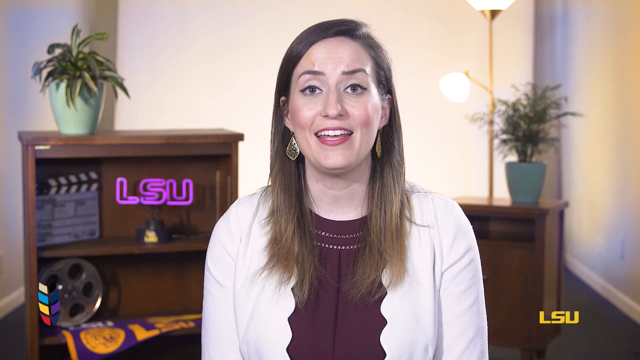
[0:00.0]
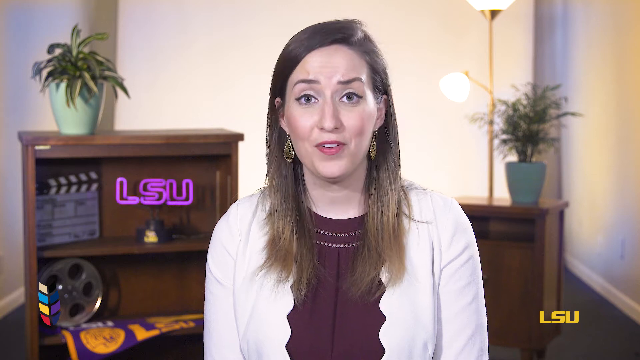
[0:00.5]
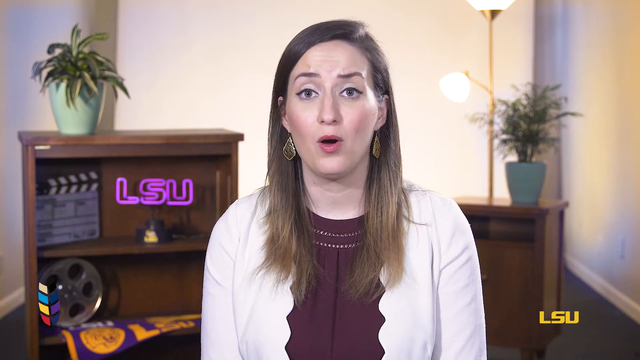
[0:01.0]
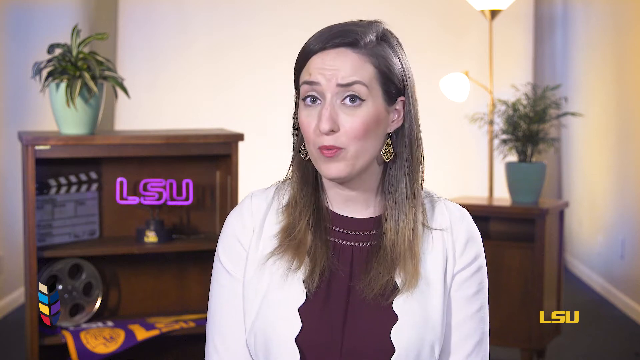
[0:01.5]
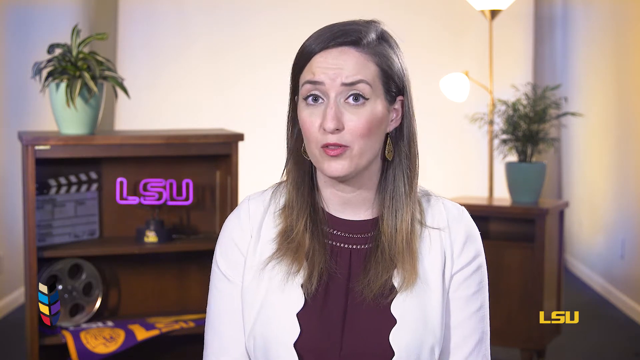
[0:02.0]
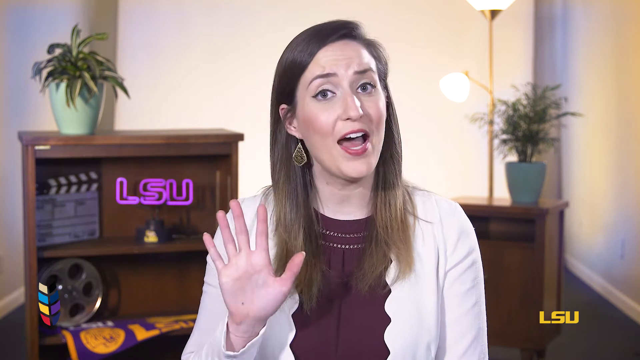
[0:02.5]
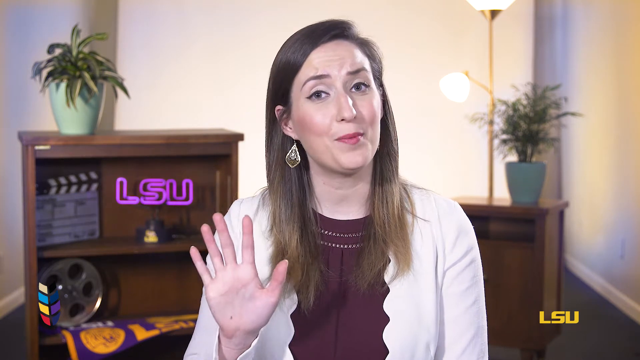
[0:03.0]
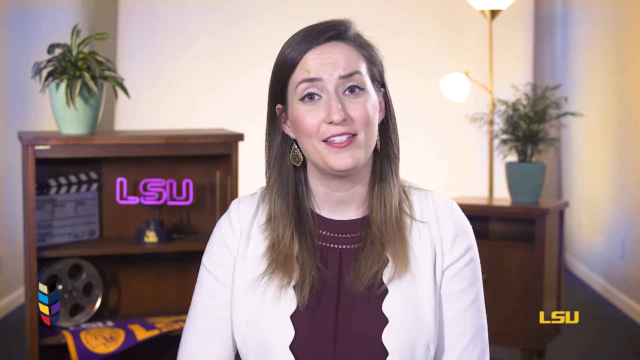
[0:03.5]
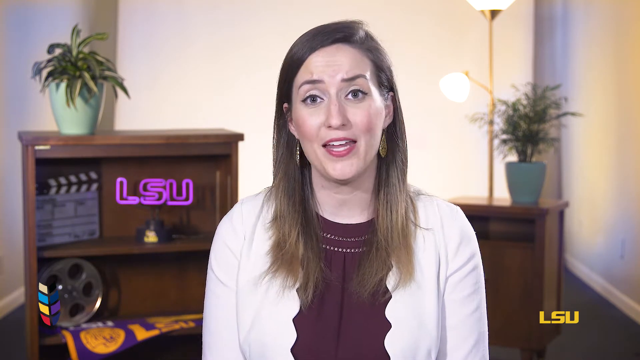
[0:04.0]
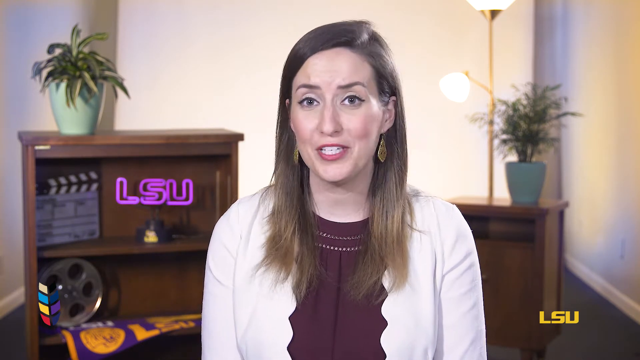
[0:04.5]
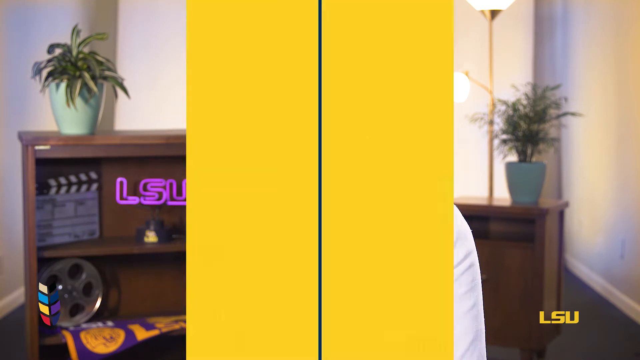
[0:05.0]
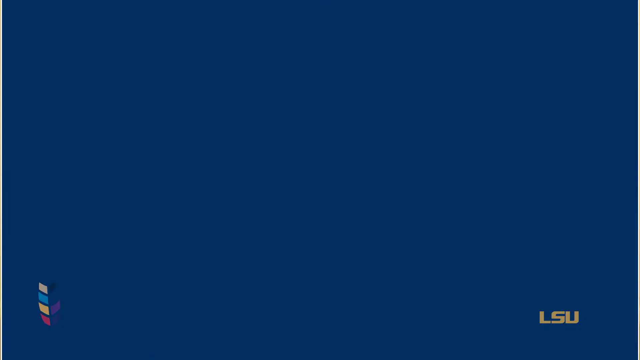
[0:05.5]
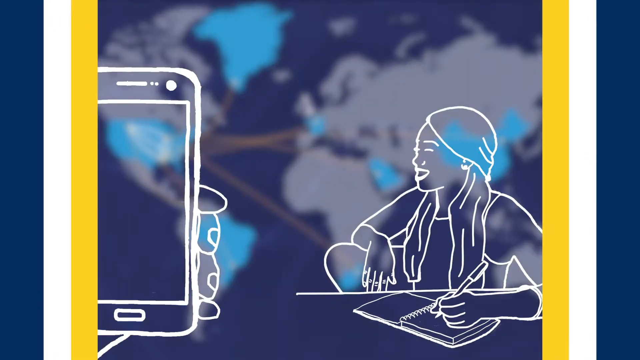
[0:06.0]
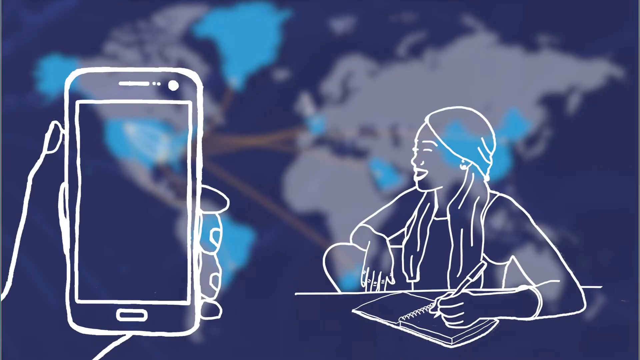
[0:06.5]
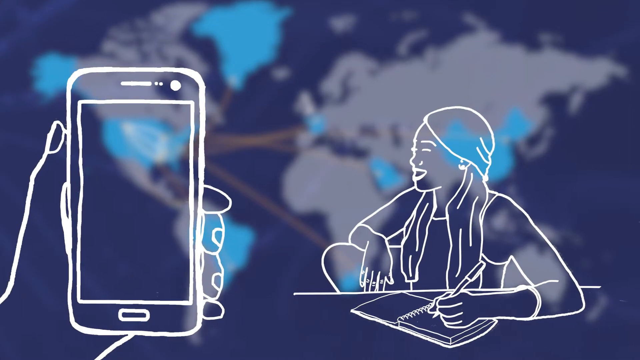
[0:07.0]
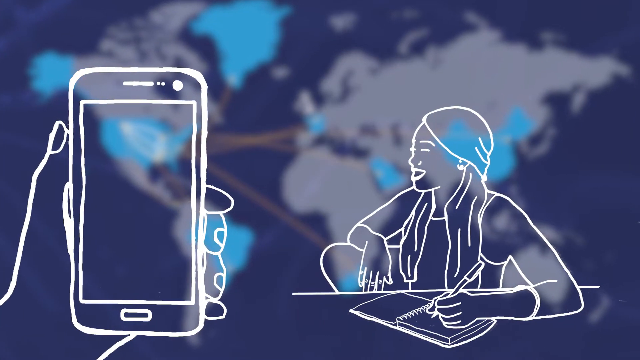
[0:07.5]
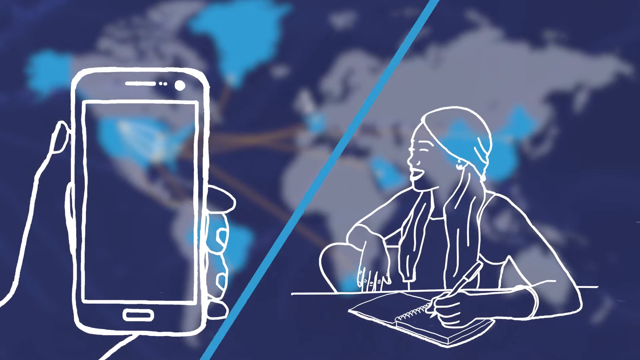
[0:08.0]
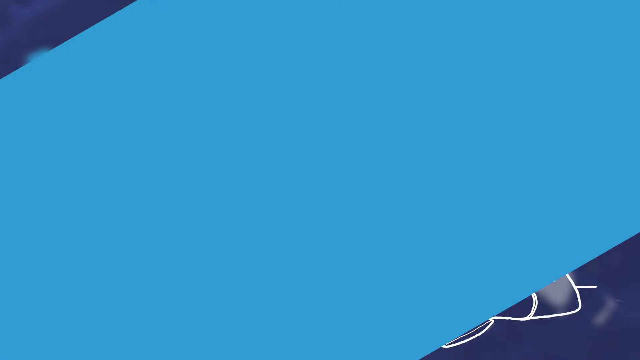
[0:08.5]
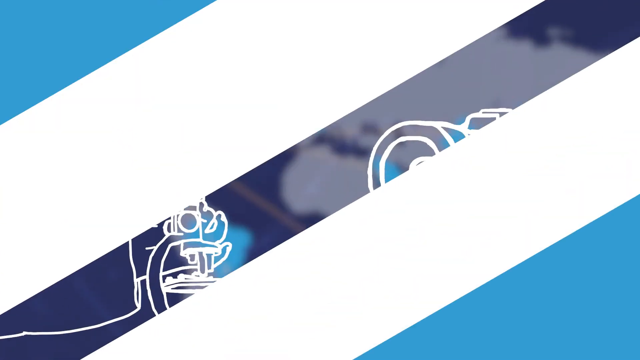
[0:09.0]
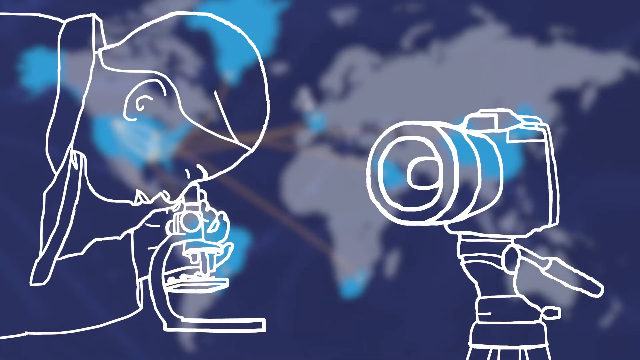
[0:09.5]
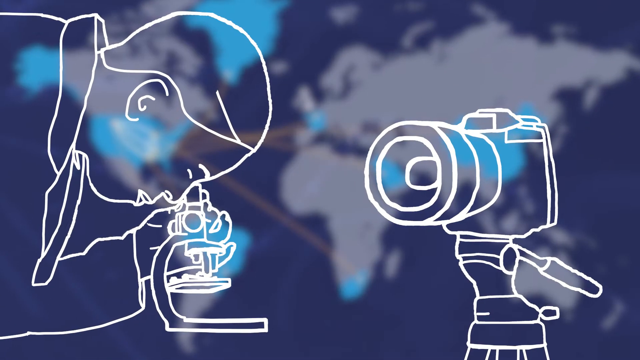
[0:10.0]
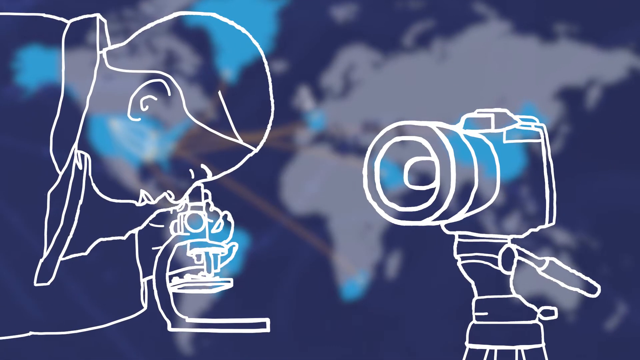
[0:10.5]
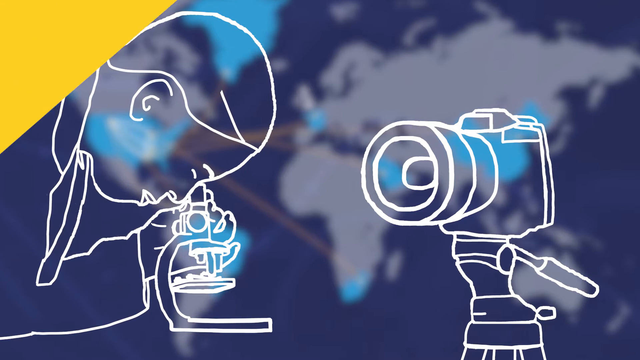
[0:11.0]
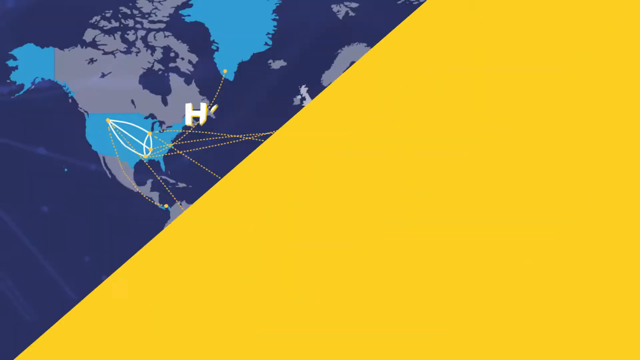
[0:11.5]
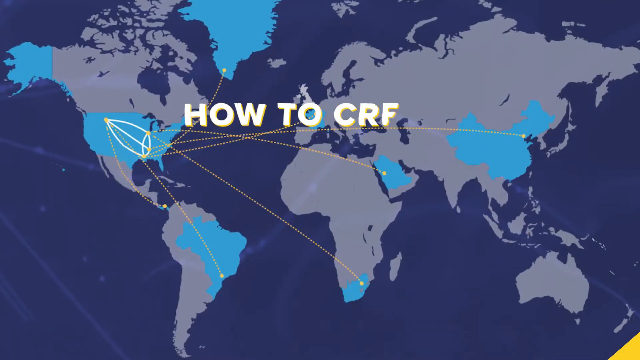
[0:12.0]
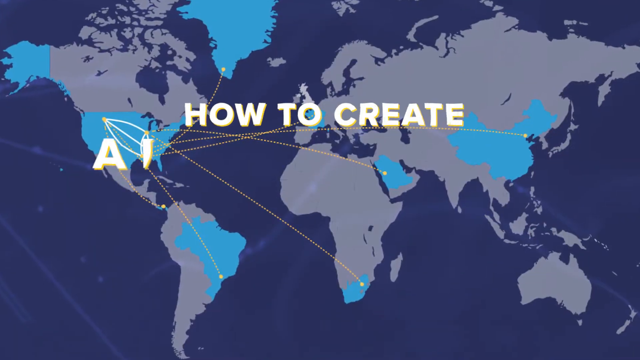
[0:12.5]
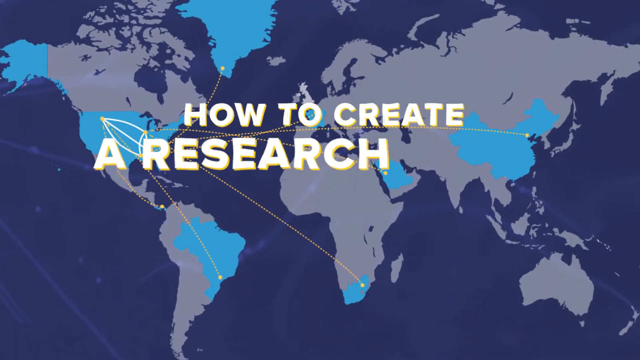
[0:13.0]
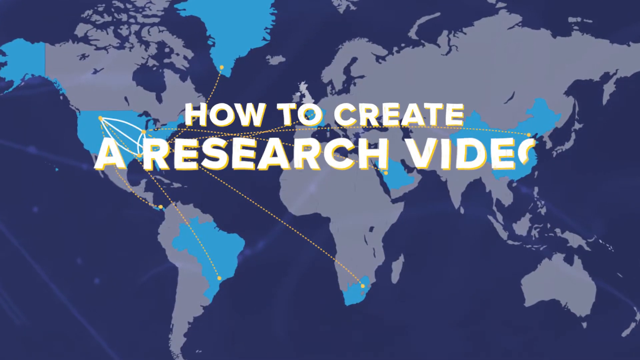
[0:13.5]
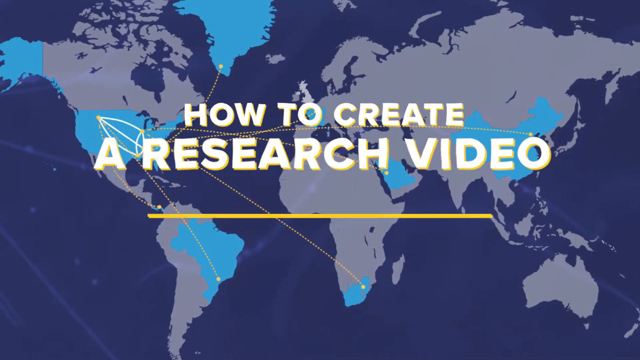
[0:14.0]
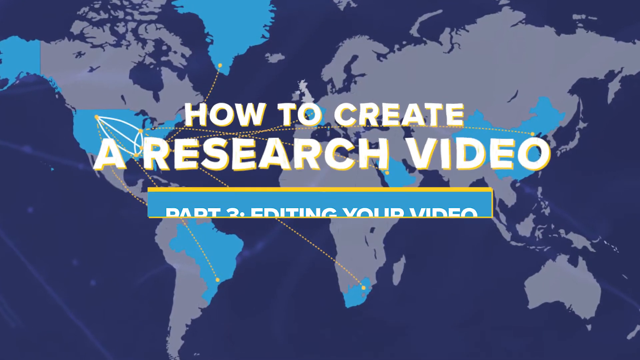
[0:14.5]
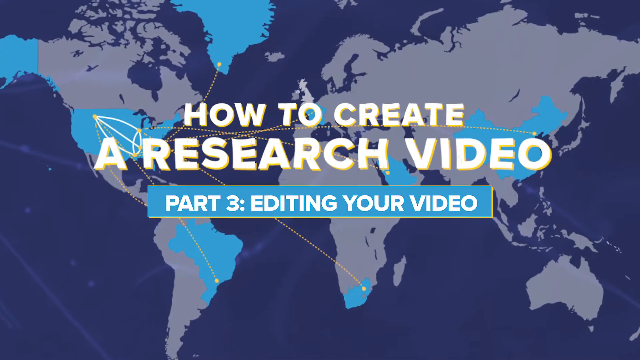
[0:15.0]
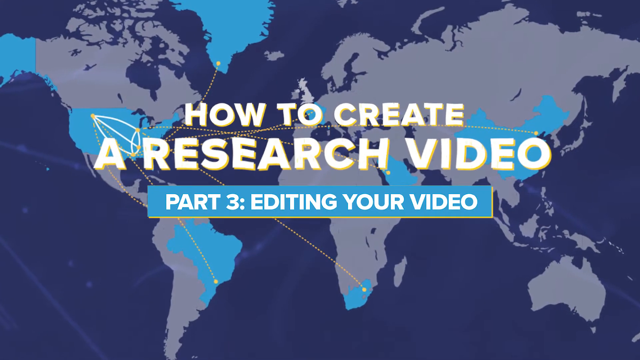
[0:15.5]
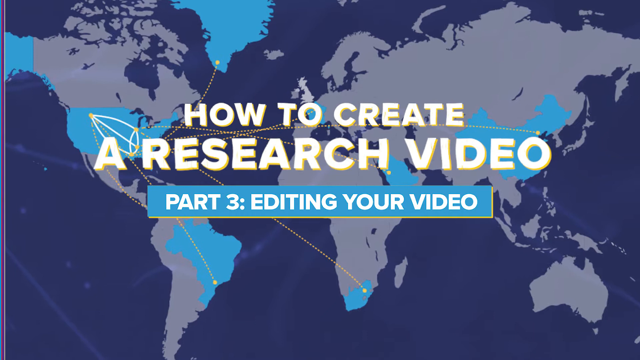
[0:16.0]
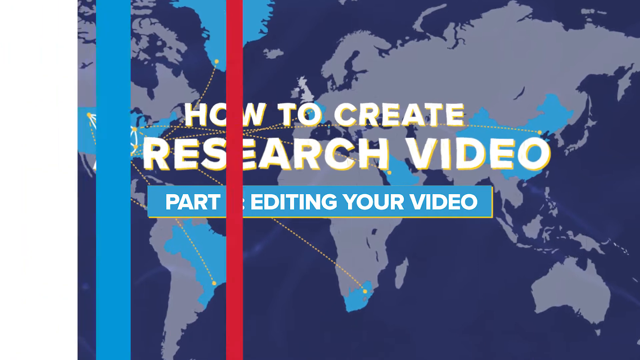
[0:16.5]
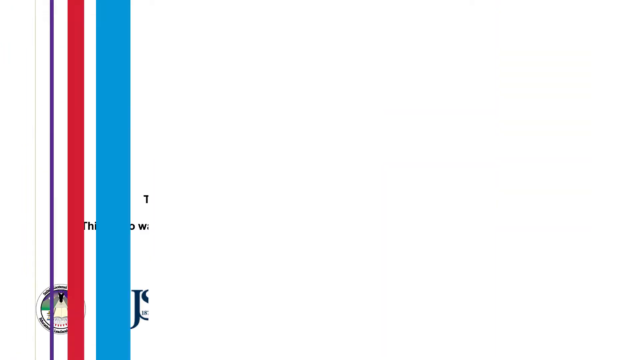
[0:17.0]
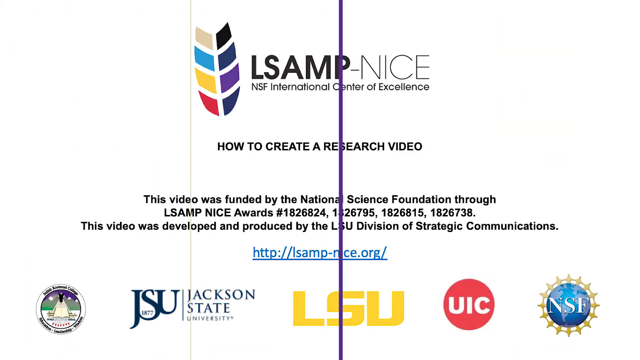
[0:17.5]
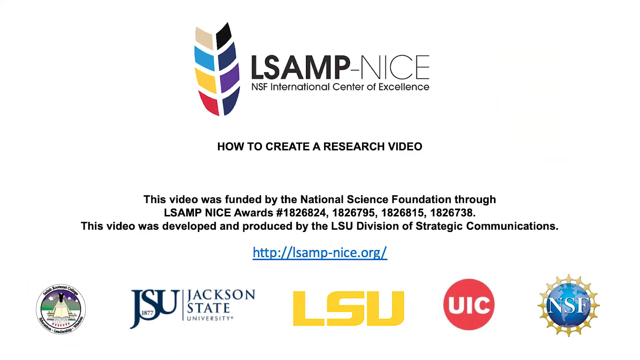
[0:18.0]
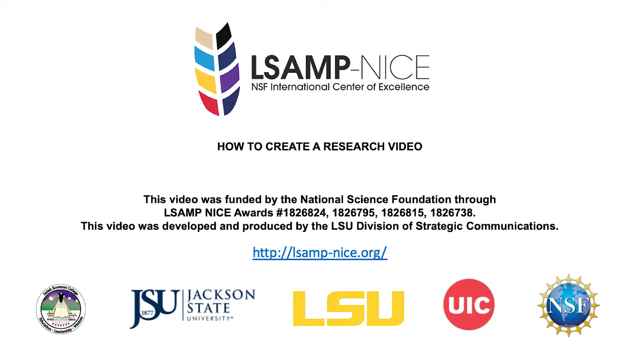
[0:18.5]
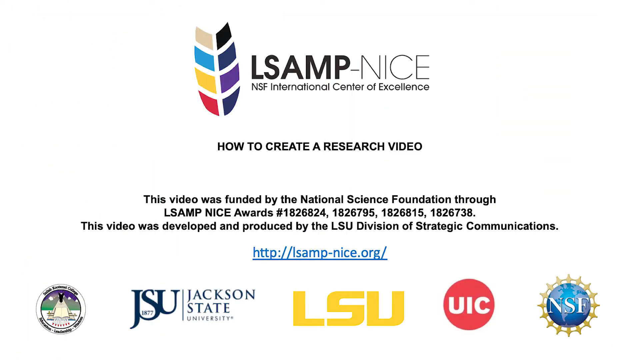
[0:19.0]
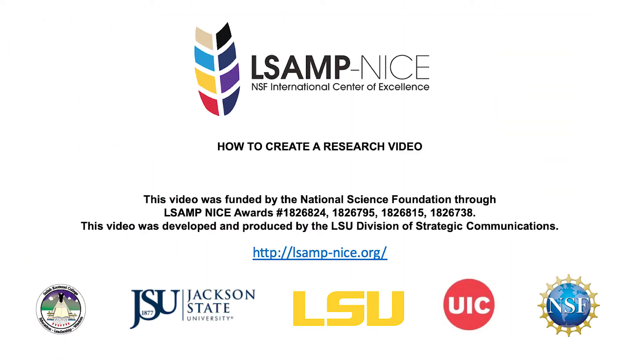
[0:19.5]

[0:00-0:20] A white woman with long brown hair and blue eyes, dressed in a burgundy blouse with a white cardigan, is speaking. Behind her is a bookcase with a neon sign that says "LSU" and a clapboard like one found on a movie set; on the first shelf of the bookcase is what looks like a reel from a projector. A potted plant is on top of the bookcase. On the other side of her there is a floor lamp in the background, as well as another potted plant on another type of case, a wooden case. The video then cuts to an animation of blue, white and yellow color blocks, then a drawing of a cell phone and a person, and then cuts to another person looking through a microscope, with a caption reading "how to create a research video."